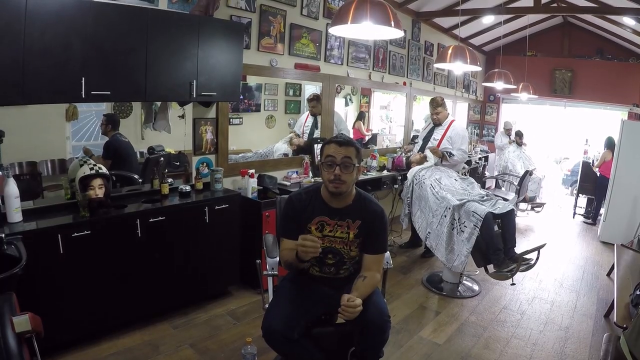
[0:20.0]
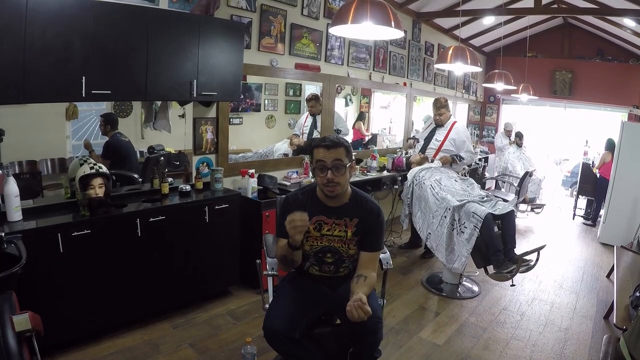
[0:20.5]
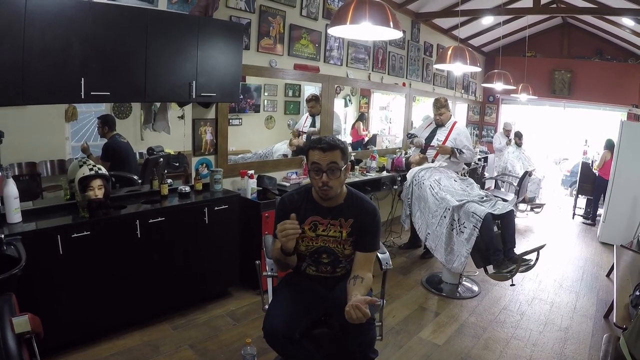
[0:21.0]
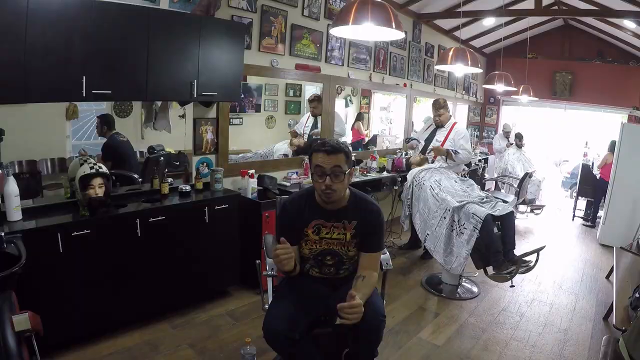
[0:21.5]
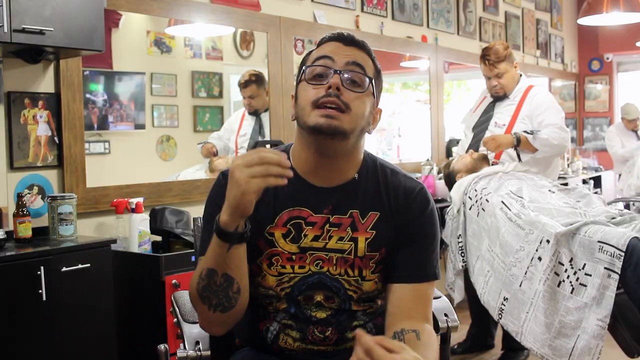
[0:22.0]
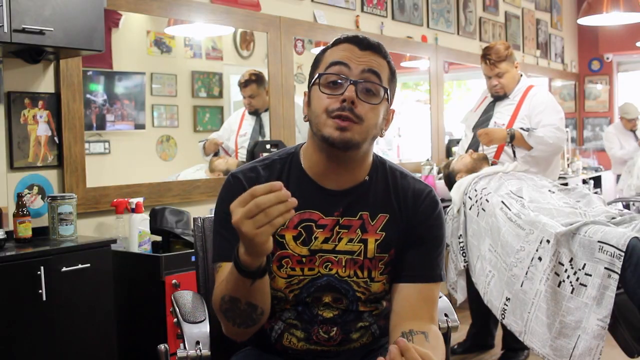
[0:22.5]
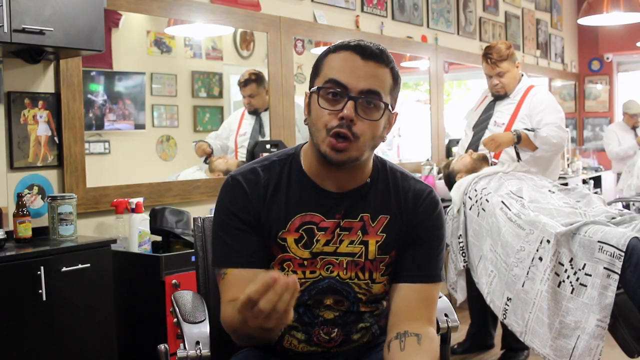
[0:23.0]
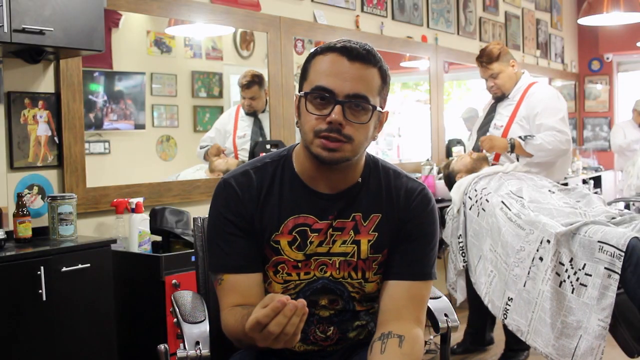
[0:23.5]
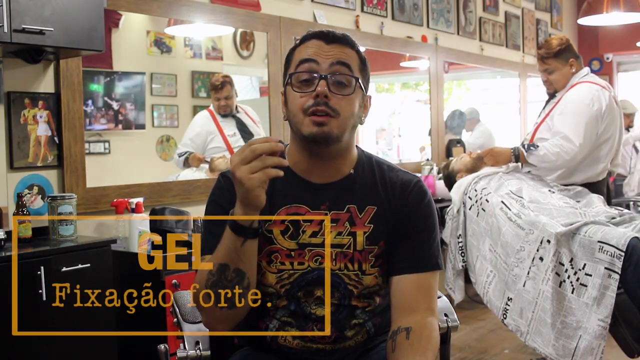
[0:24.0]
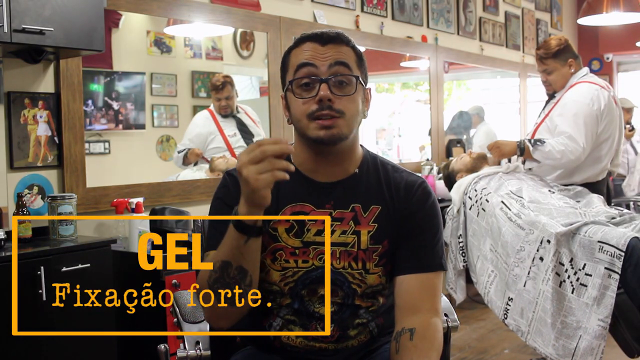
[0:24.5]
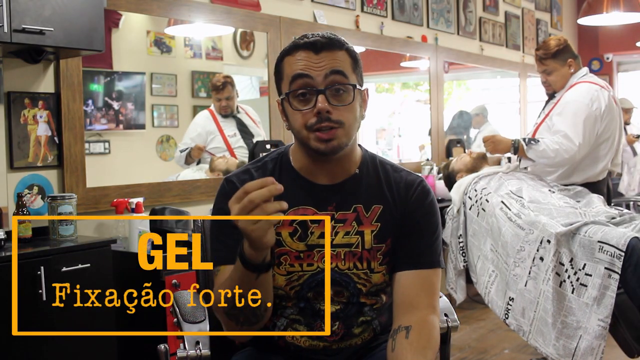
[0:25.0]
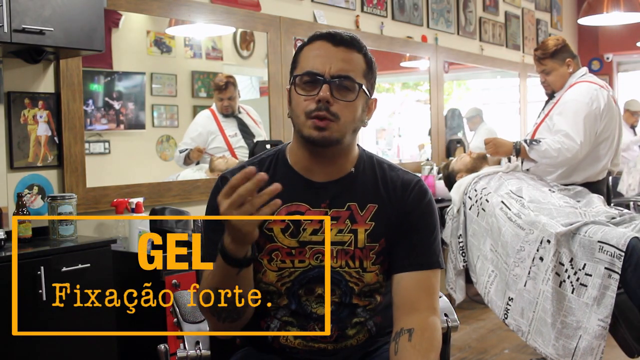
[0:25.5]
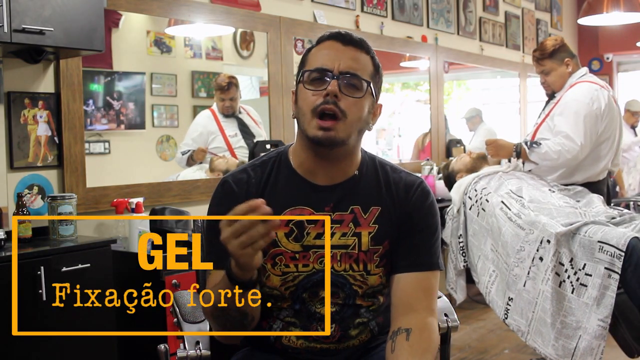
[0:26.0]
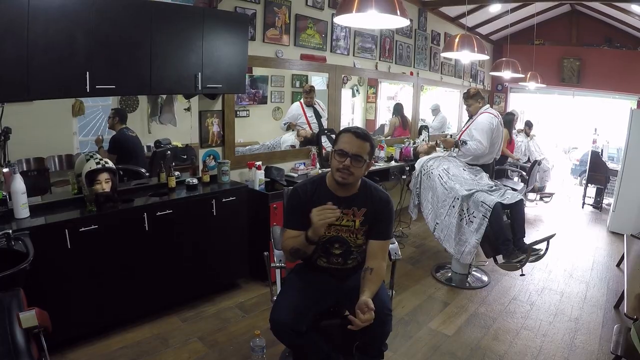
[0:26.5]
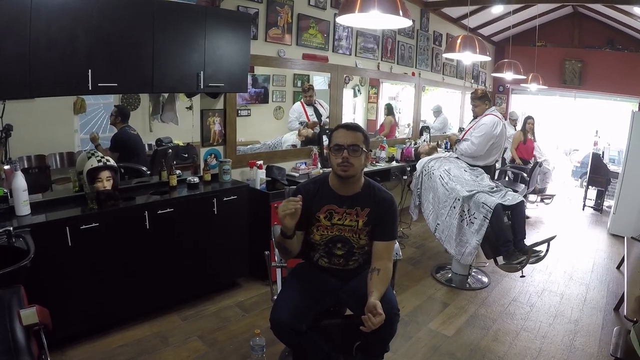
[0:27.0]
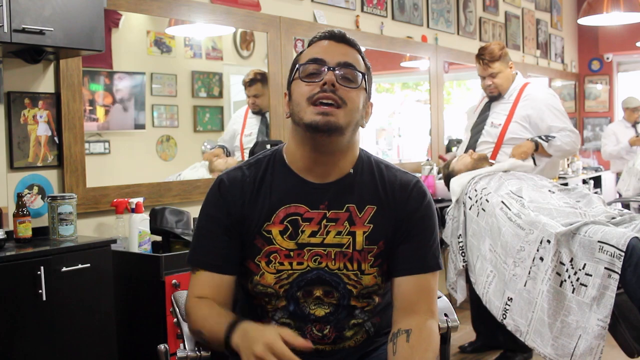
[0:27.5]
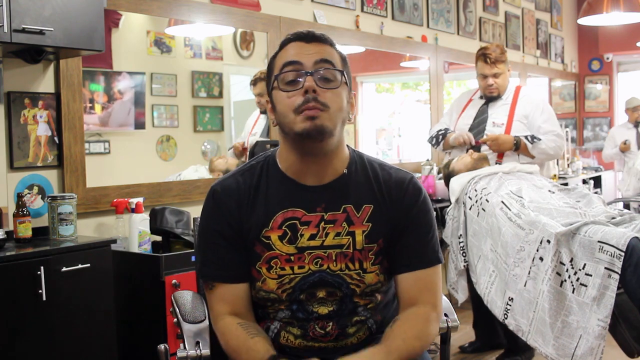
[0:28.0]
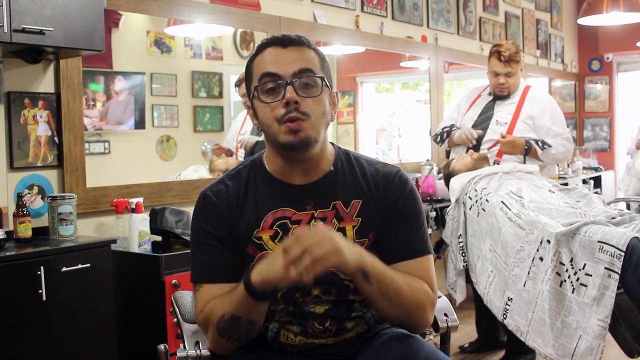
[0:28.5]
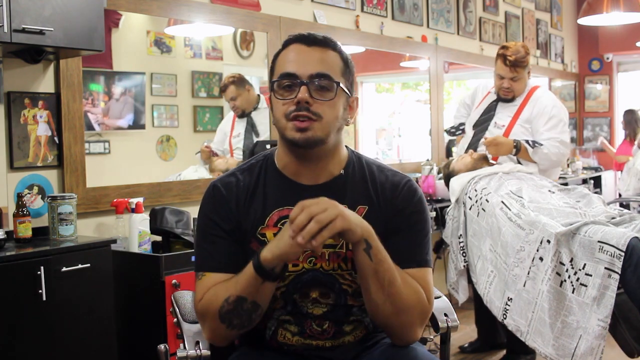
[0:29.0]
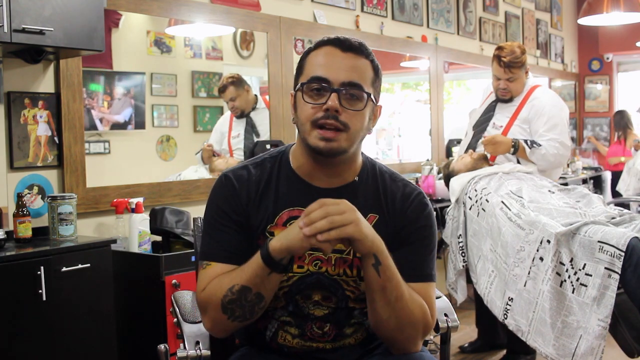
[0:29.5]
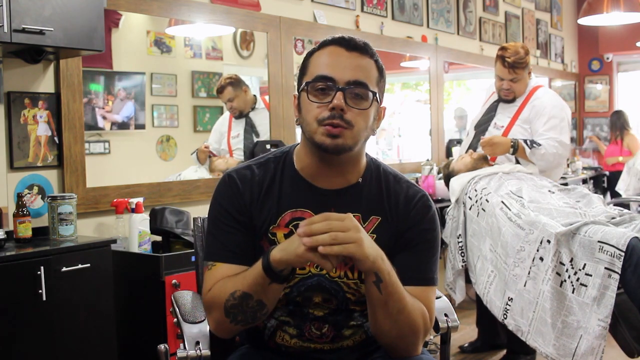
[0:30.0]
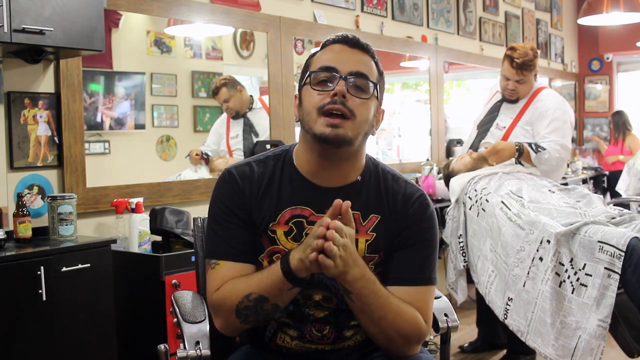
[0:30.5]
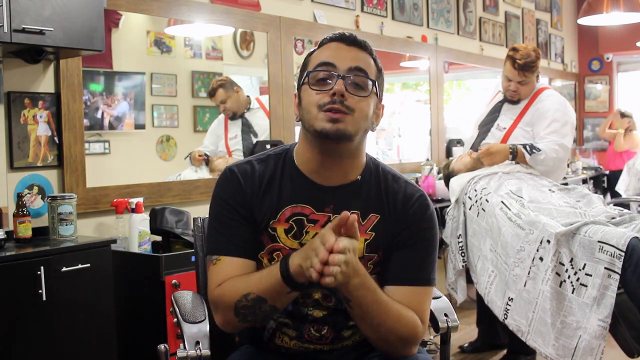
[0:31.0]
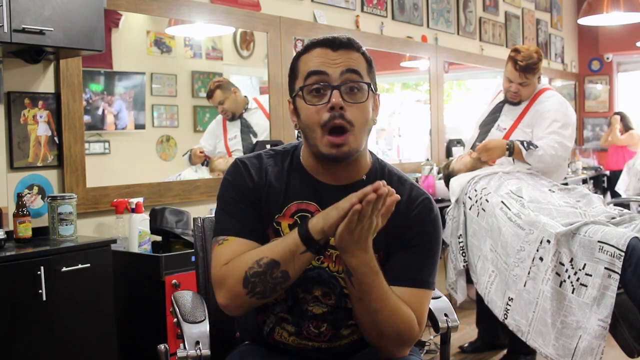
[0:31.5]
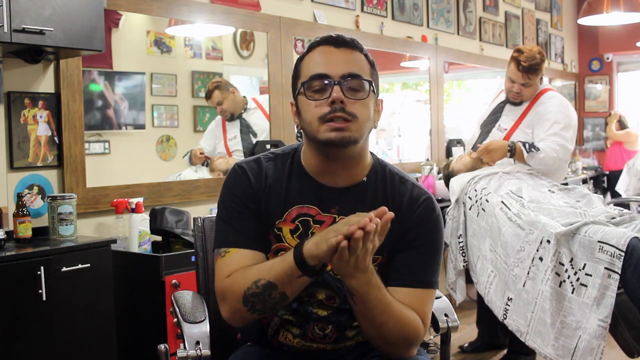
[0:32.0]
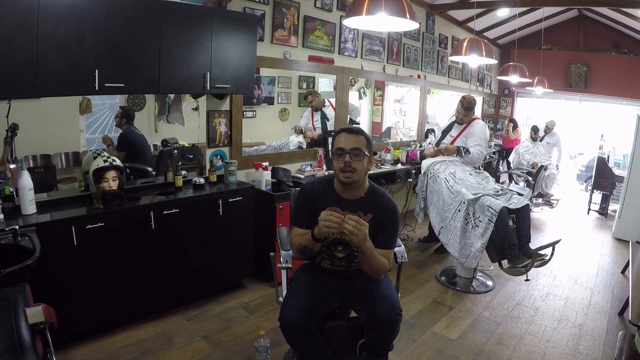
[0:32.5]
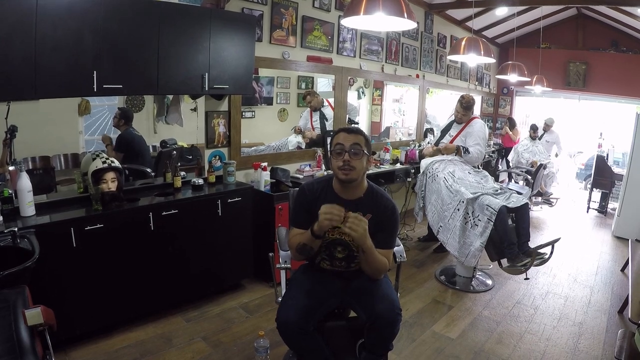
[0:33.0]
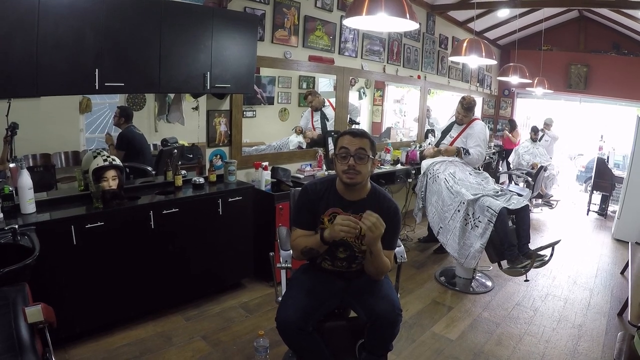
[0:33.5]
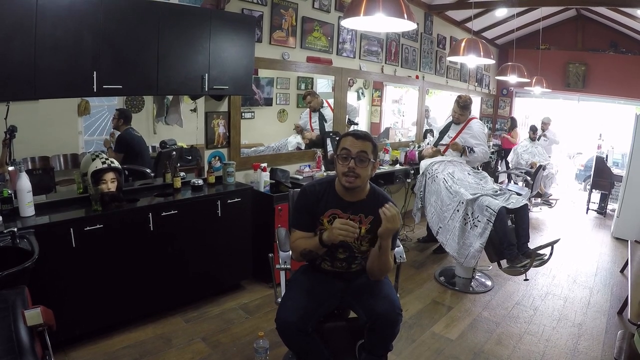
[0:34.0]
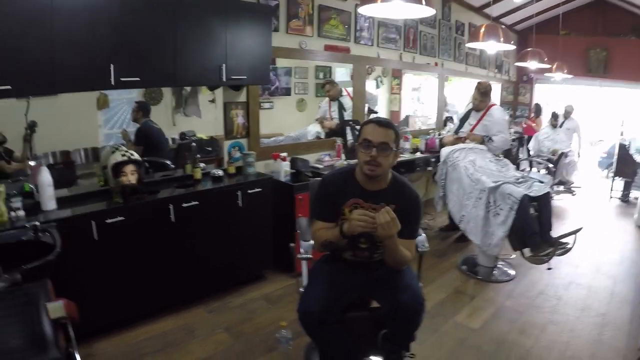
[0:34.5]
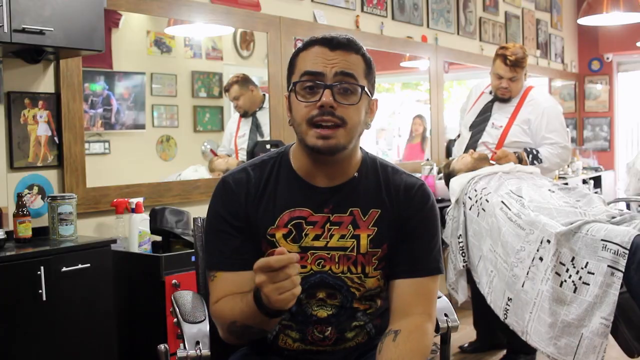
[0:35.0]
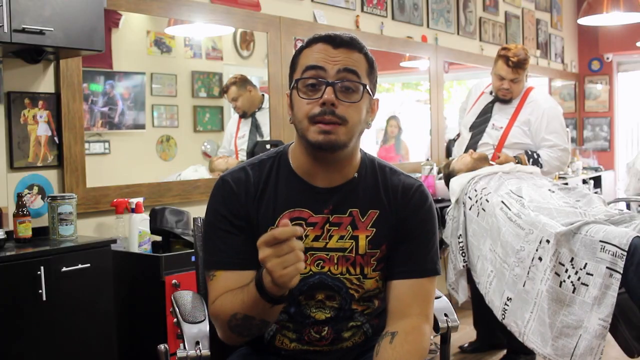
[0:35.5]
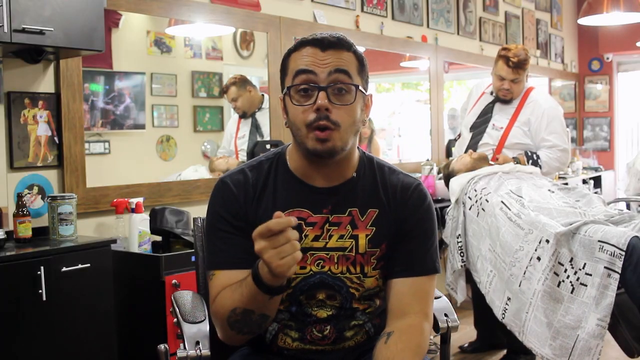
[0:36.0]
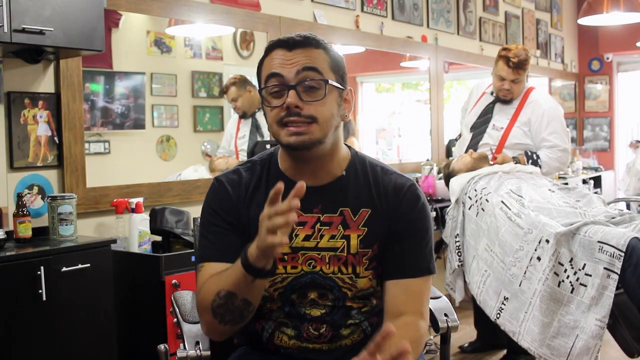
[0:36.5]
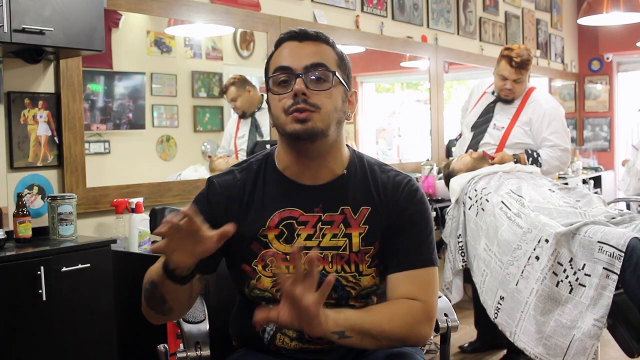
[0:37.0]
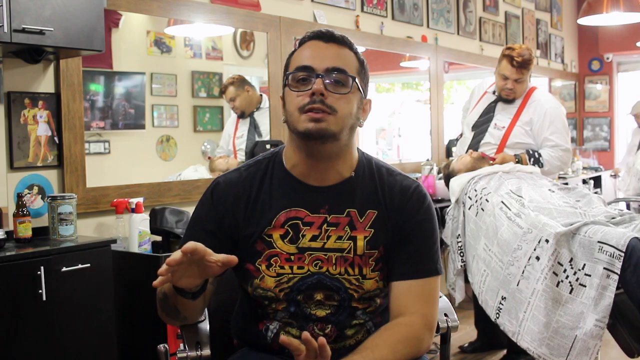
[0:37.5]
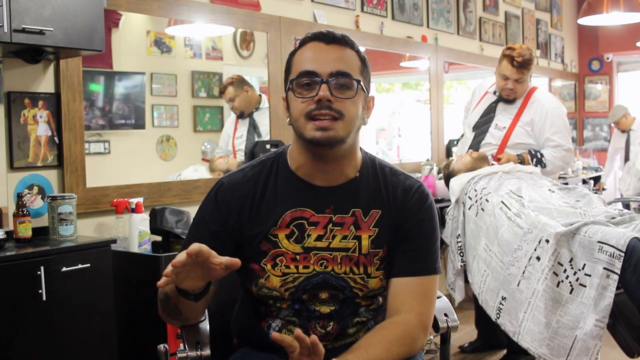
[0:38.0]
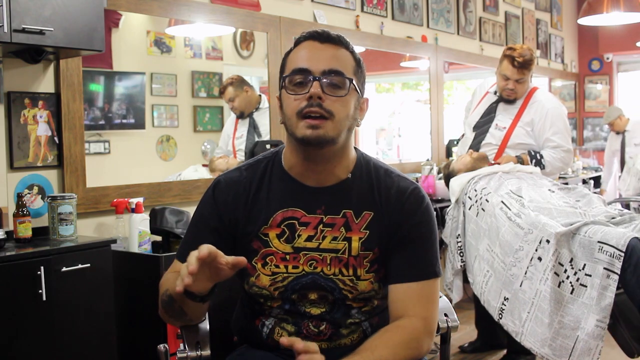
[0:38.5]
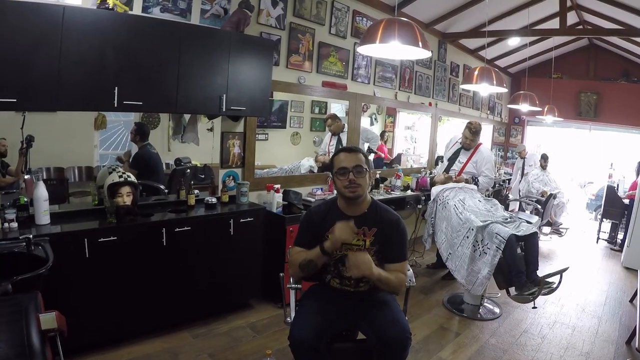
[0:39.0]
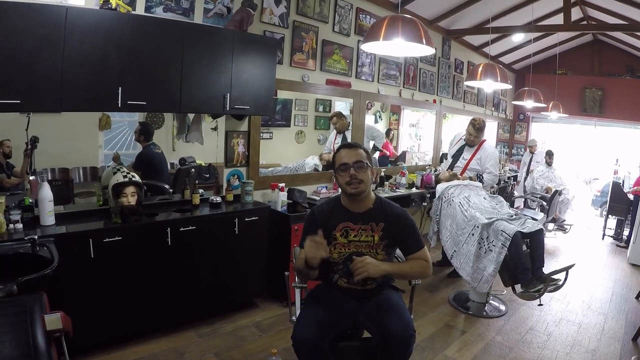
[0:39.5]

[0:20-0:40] A man sitting on a chair introduces himself on the screen and speaks using body language. He wears brown and black clothes: a black t-shirt with yellow stuff on the front and black trousers. He appears to be advertising the place, which looks like a salon, with people working in it. In the background a lady in a red t-shirt opens the fridge, and another man in a white shirt and black trousers also opens what is apparently a fridge. The room is decorated with many picture frames on the walls, and in a big mirror a man can be seen doing somebody's hair. The speaking man wears a black watch and black glasses and has a tattoo on his hand. In the lower corner there is something written in yellow, in a language that is not clear.